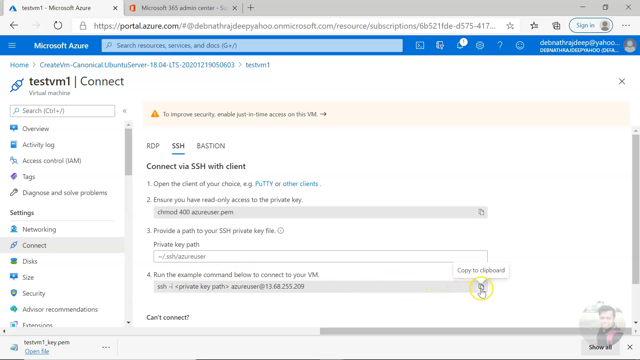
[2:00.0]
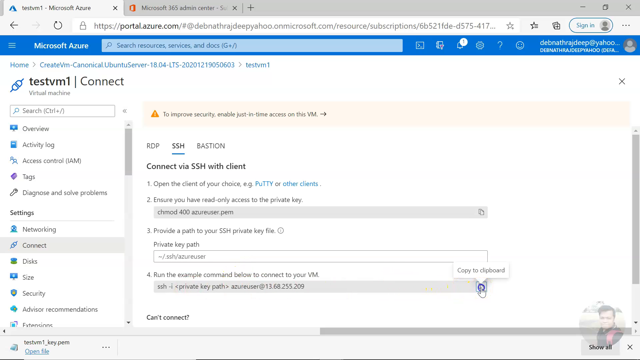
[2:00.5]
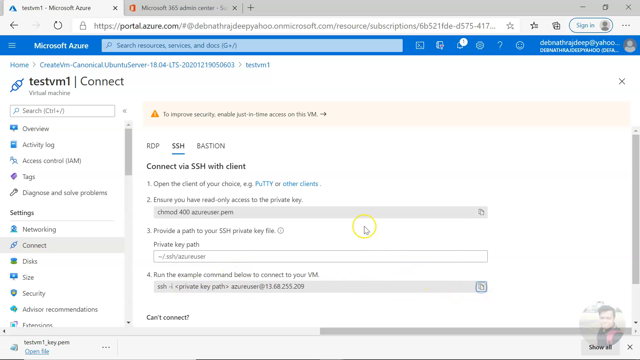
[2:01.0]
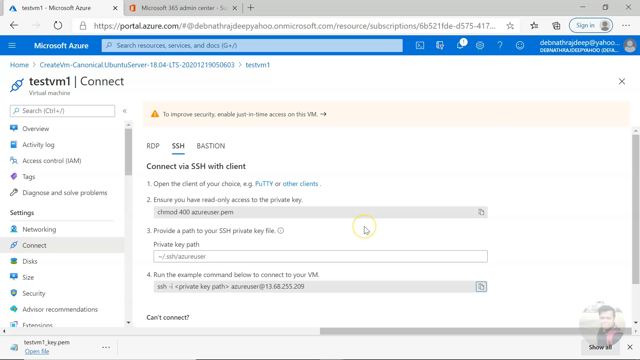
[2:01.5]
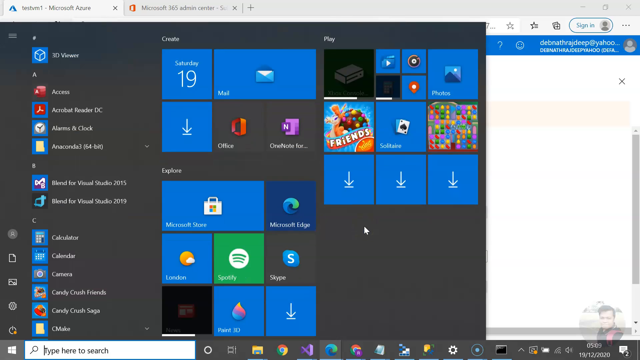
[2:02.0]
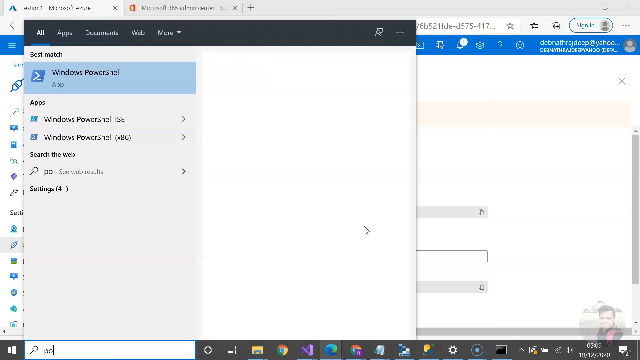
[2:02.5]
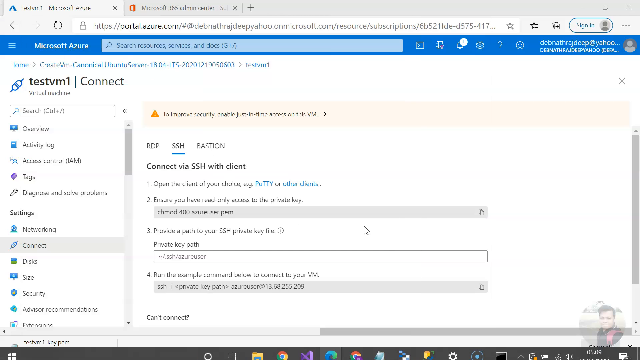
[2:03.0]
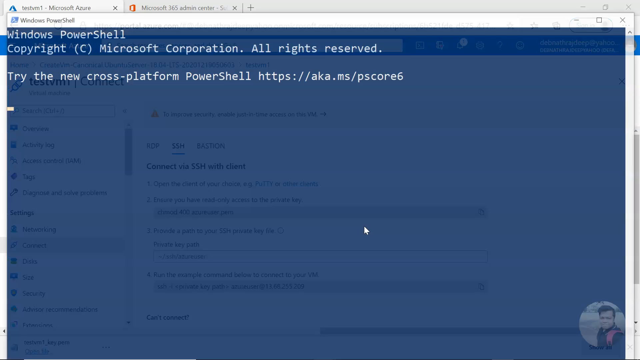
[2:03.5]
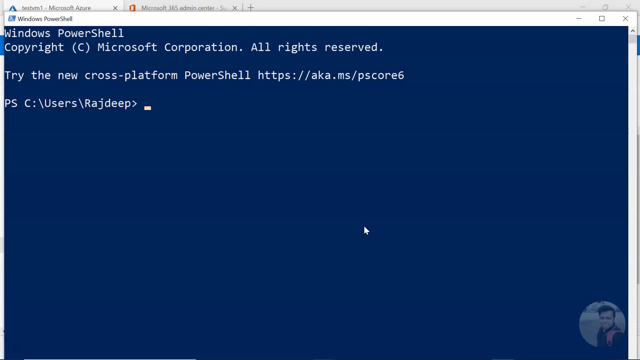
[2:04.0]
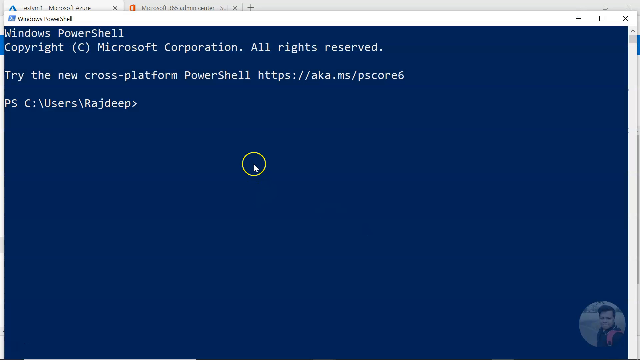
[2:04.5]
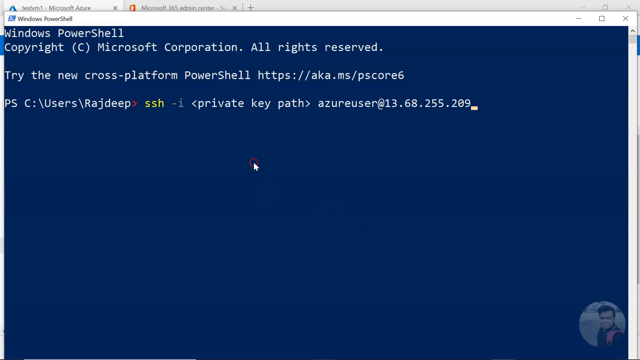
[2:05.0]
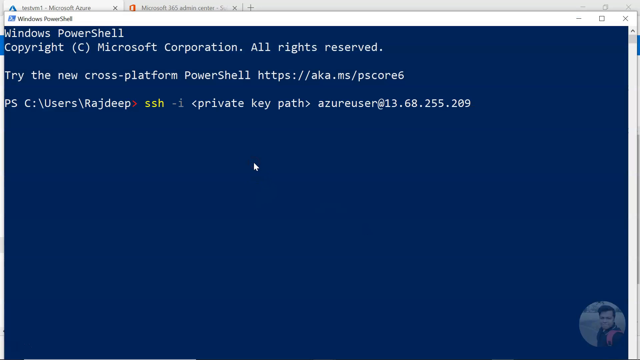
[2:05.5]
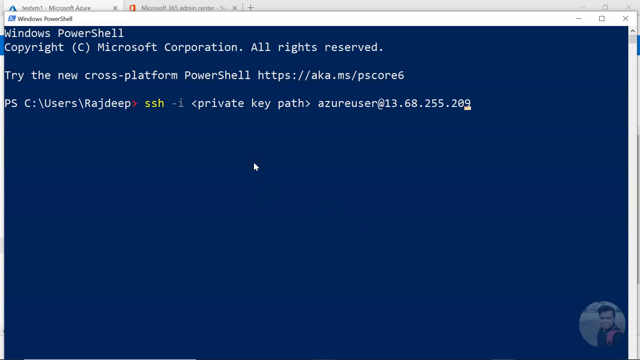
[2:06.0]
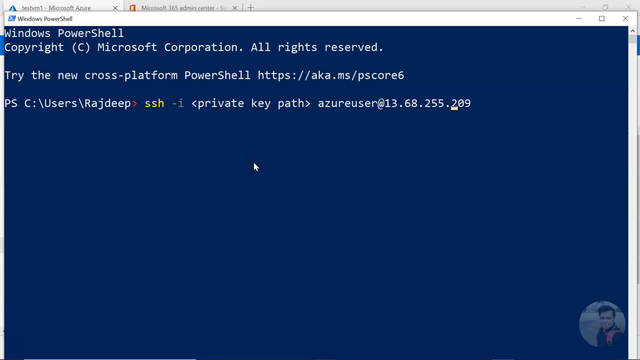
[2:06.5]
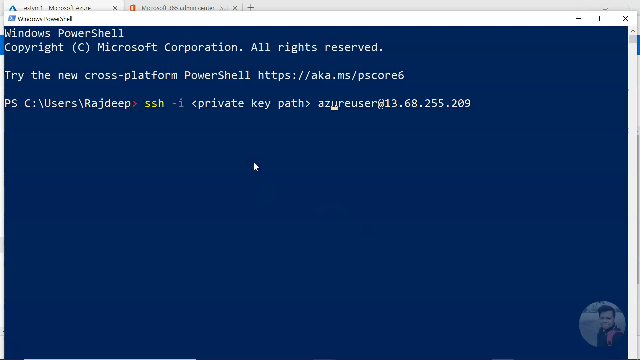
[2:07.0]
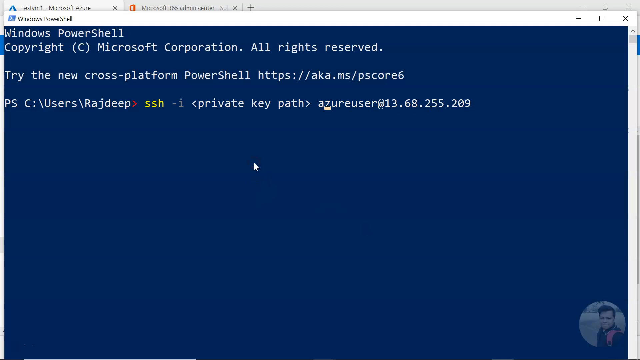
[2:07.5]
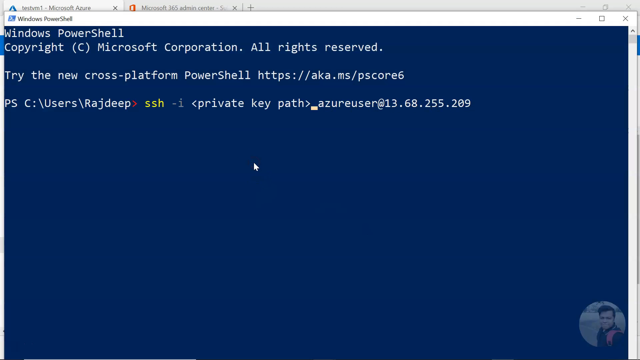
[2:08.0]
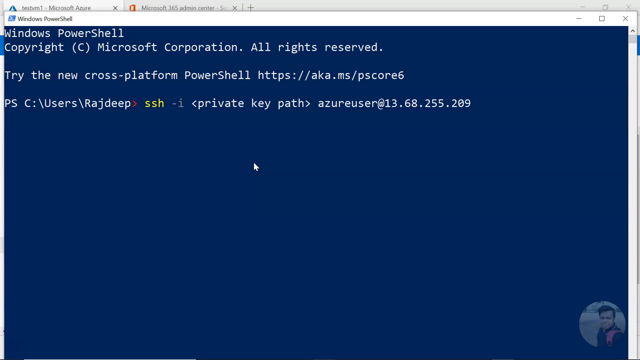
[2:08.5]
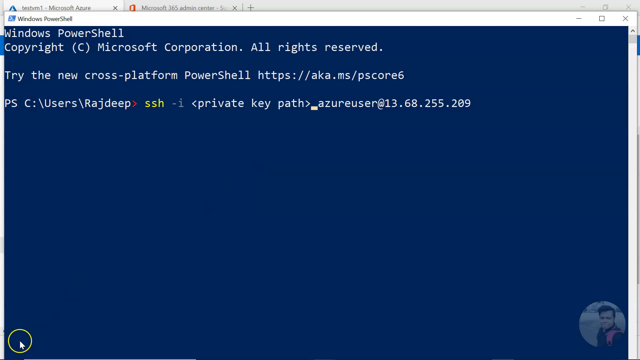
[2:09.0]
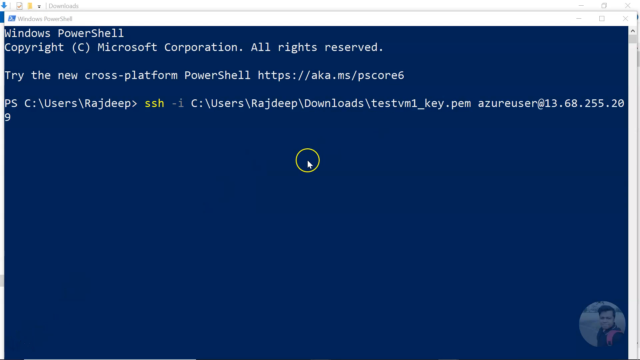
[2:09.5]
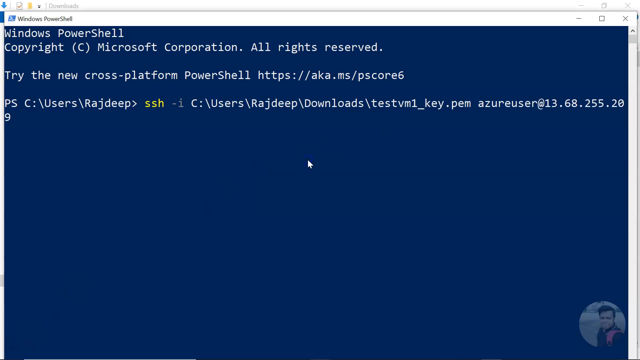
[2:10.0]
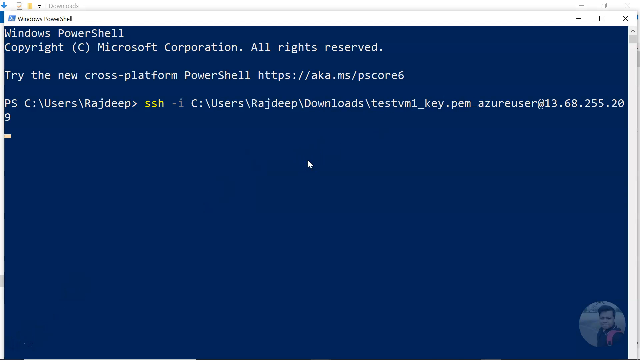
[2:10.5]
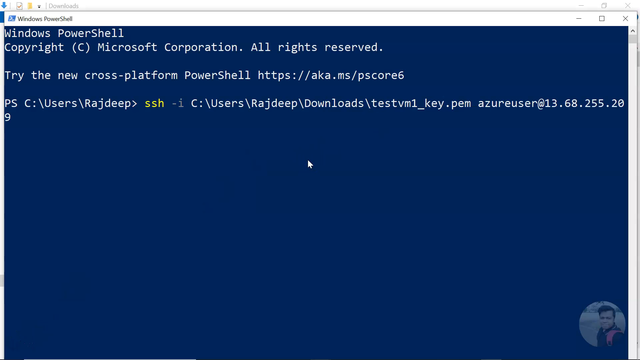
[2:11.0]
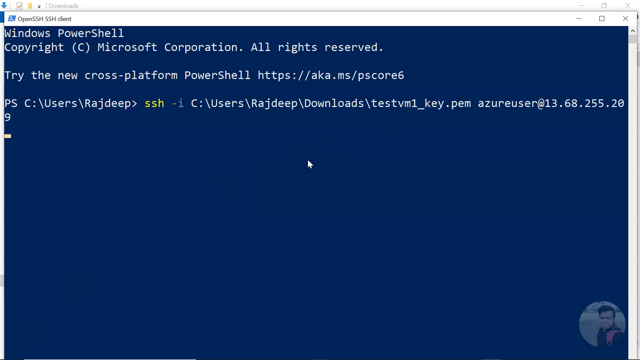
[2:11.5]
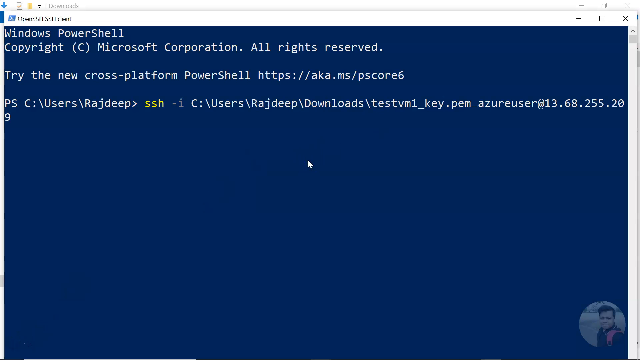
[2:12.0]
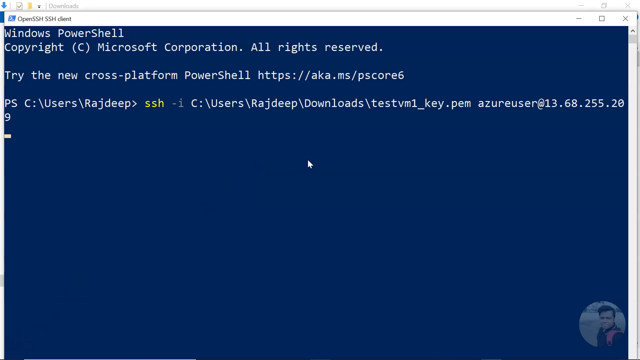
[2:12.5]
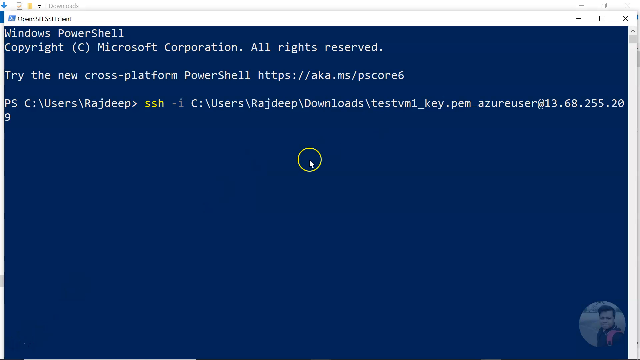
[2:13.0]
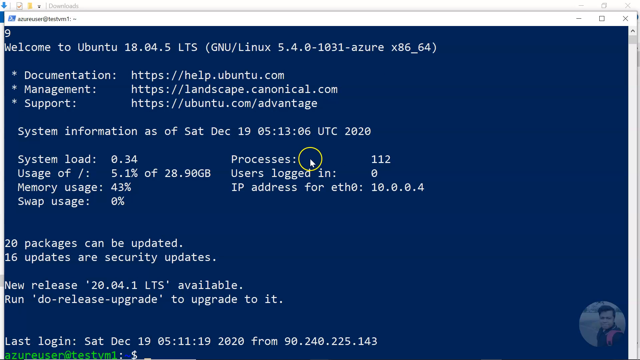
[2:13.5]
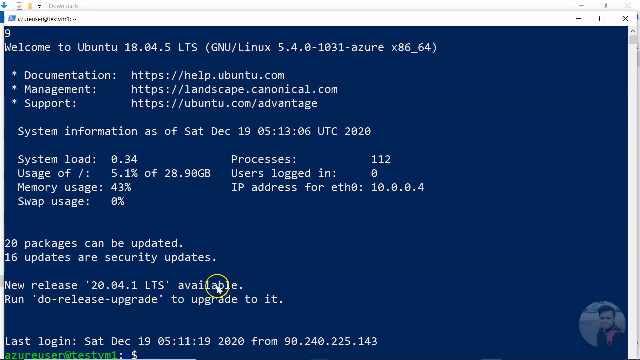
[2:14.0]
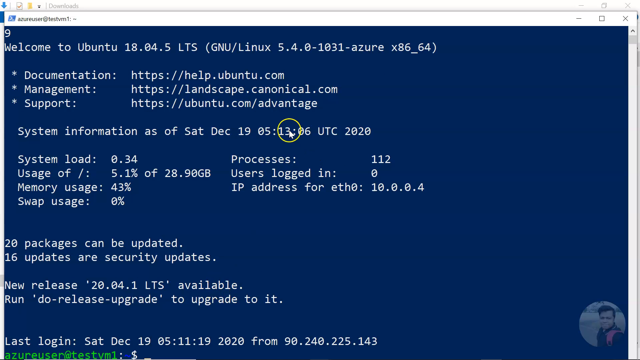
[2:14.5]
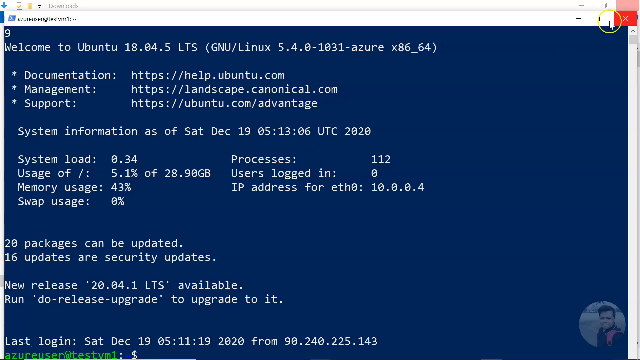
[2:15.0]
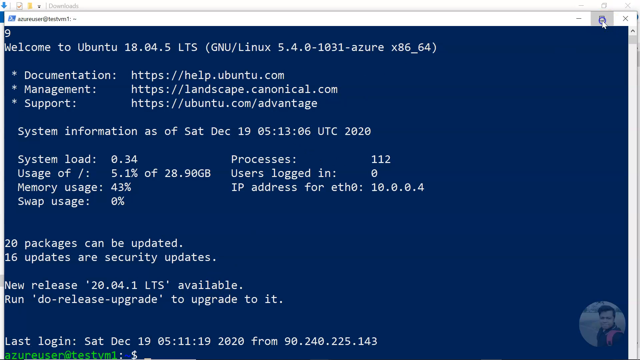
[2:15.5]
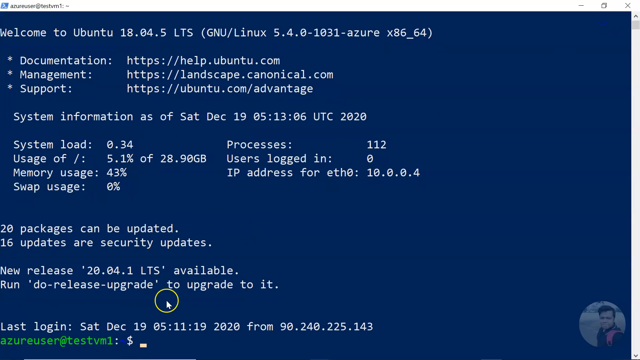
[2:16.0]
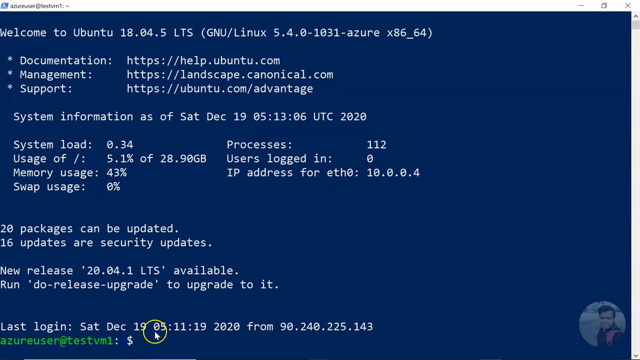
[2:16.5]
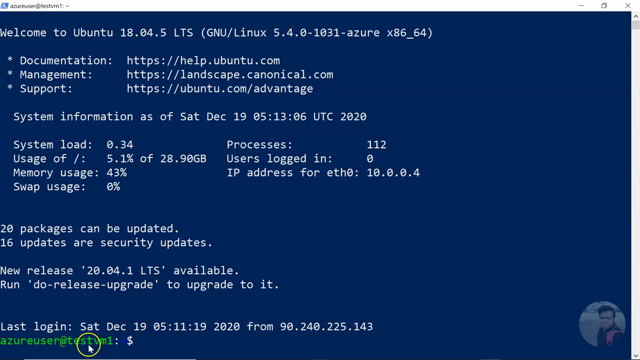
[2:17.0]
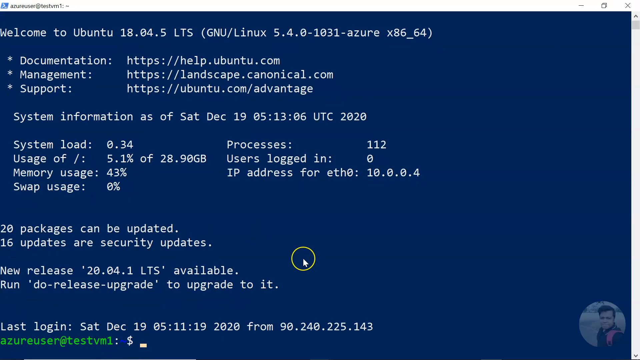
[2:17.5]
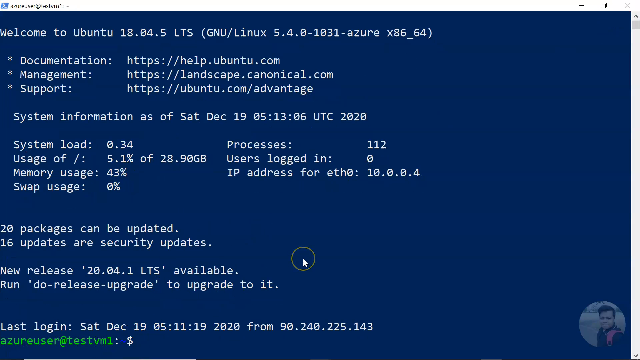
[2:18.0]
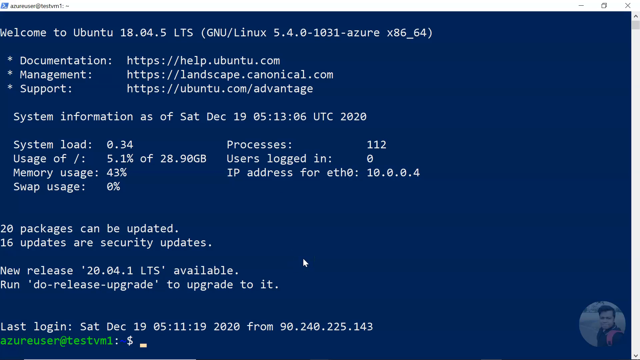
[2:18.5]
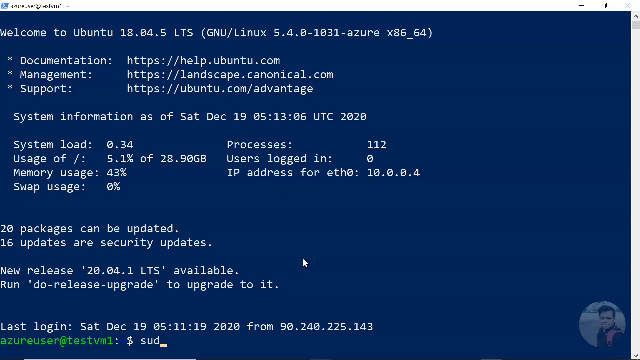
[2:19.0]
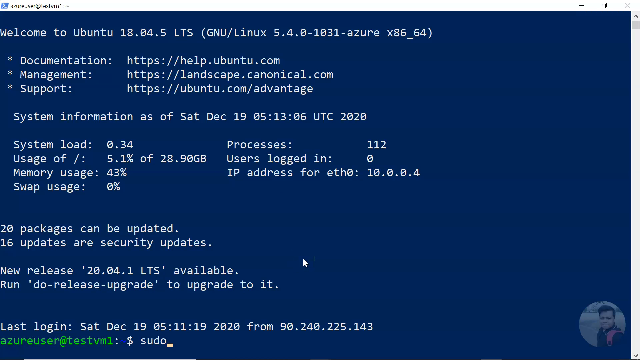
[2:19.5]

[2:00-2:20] The test VM1 virtual machine page on portal.azure.com is open under the SSH tab, which gives directions on how to connect via SSH with clients. In the fourth direction, a text input box contains an SSH command, and the user clicks the copy icon on its right side. The user then goes to the search bar in the bottom menu tray of the desktop and types "PO", bringing up a list of options in the start menu, and selects Windows PowerShell under the best match option. A new Windows PowerShell window pops up and the user pastes the copied command. They move the cursor in front of the Azure user ID and paste in the directory location of the downloaded testvm1_key.pem file. They enter the prompt, and text appears welcoming them to Ubuntu, reading "Welcome to Ubuntu 18.0.5 LTS", with links for documentation and management support and system information stats such as memory usage, processes and users logged in. It says "20 packages can be updated" and "16 updates are security updates", and that a new release, 20.04.1 LTS, is available, with a prompt on how to upgrade. The user clicks the maximize button at the top of the PowerShell window, making it full screen; at the bottom, last login information is shown, followed by a new prompt line inside the testvm1 virtual machine. The user types "sudo".